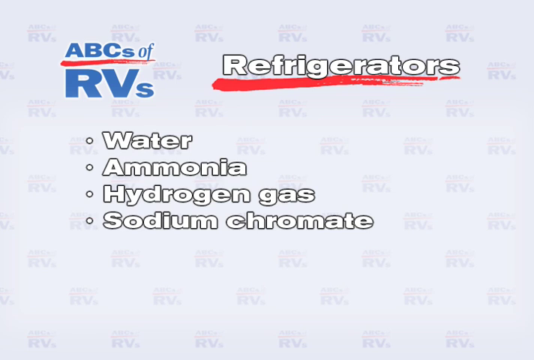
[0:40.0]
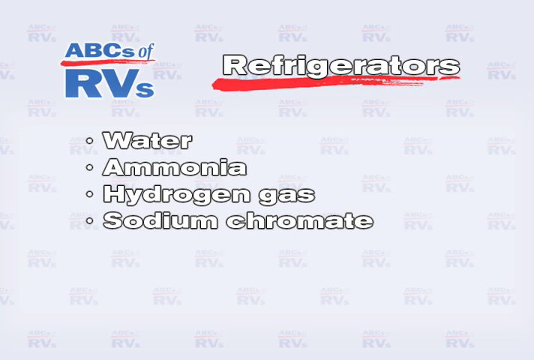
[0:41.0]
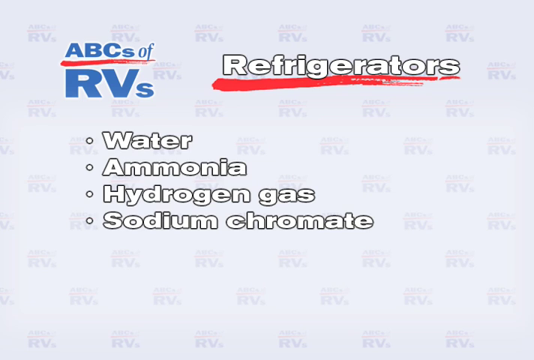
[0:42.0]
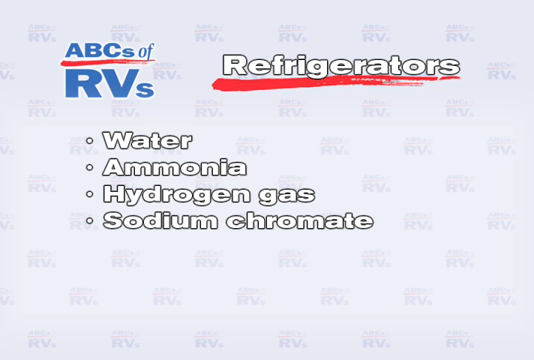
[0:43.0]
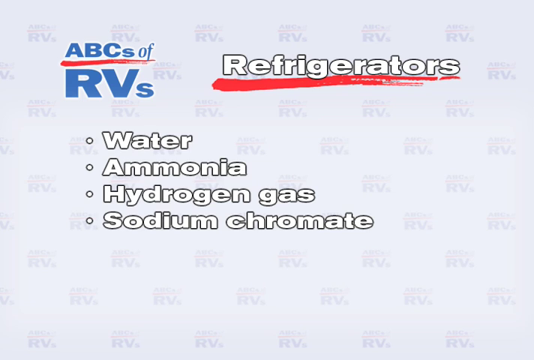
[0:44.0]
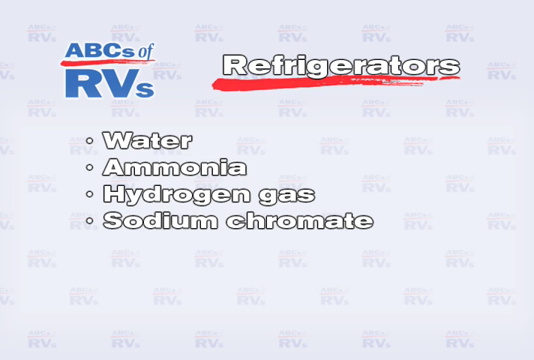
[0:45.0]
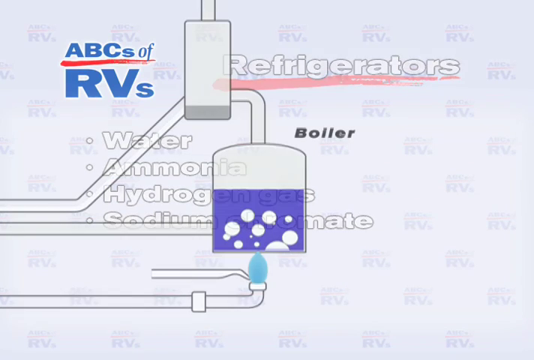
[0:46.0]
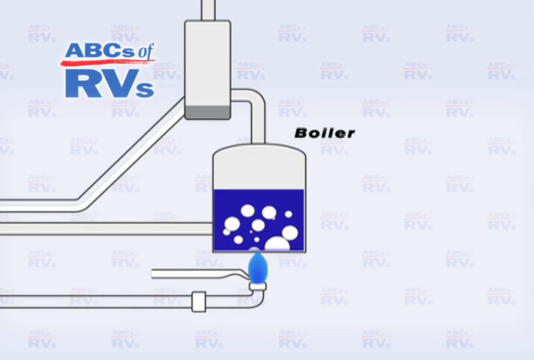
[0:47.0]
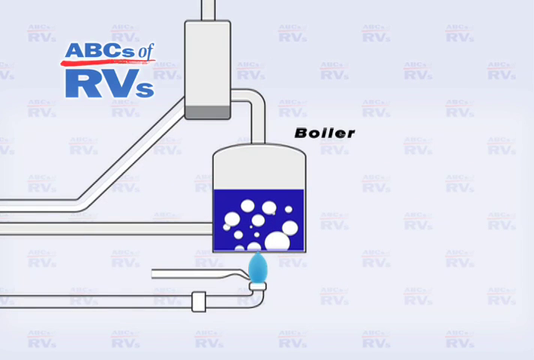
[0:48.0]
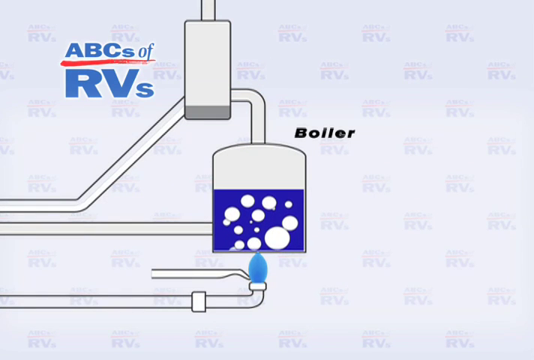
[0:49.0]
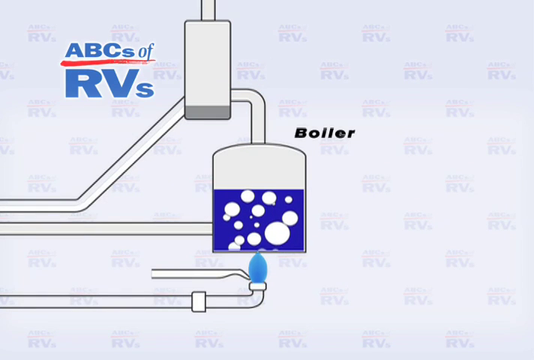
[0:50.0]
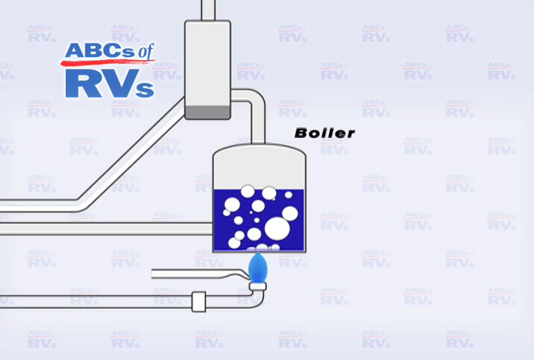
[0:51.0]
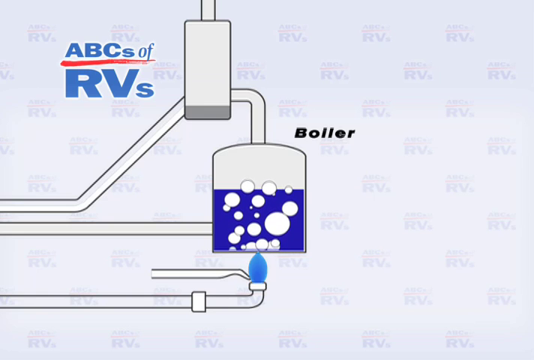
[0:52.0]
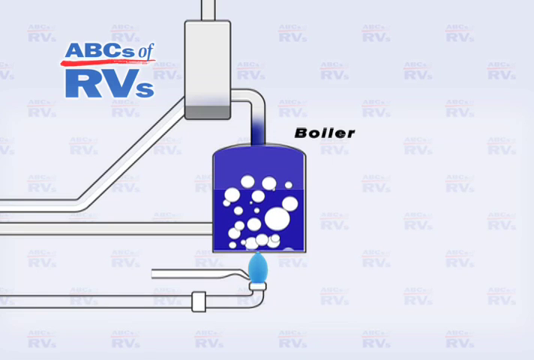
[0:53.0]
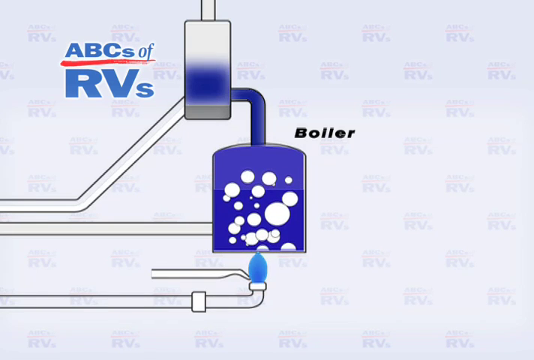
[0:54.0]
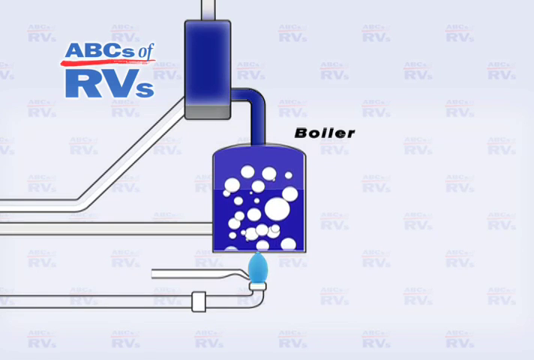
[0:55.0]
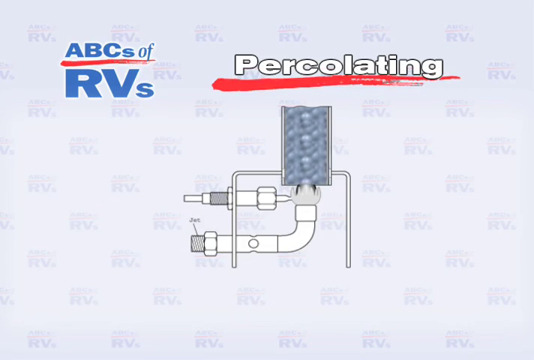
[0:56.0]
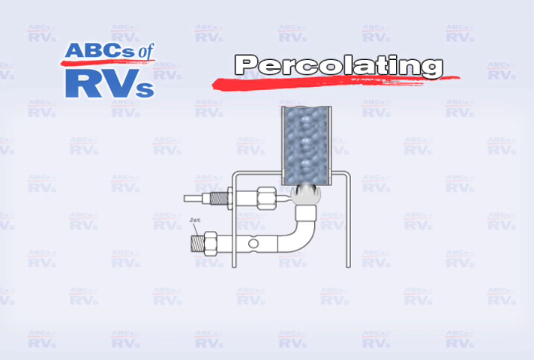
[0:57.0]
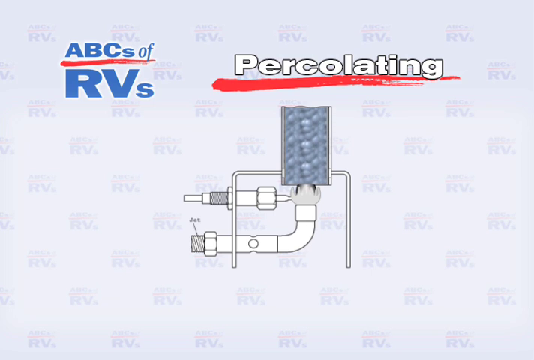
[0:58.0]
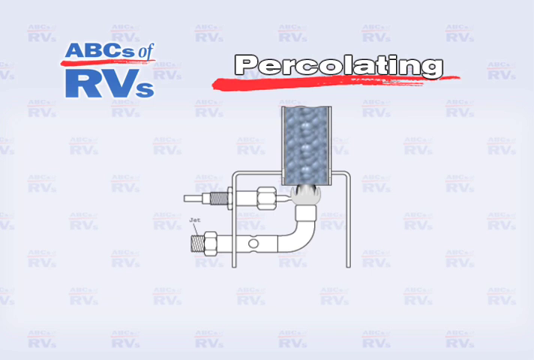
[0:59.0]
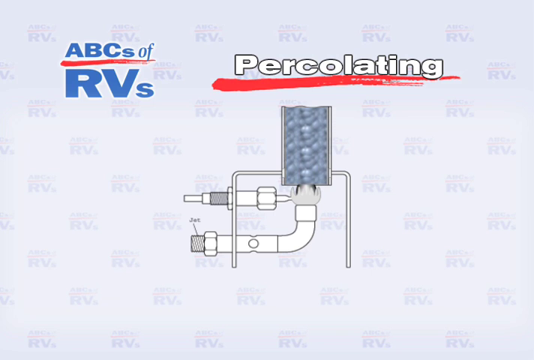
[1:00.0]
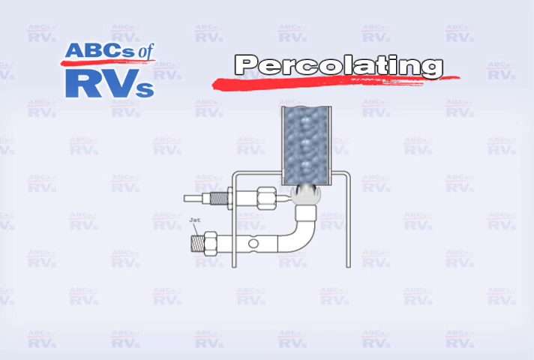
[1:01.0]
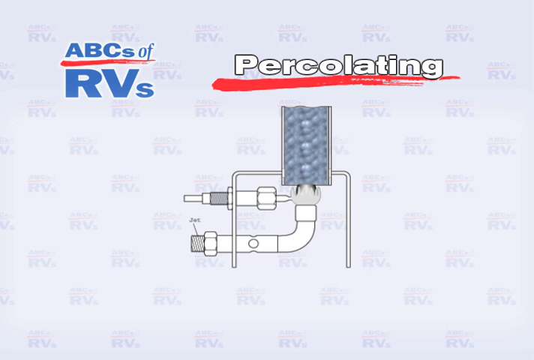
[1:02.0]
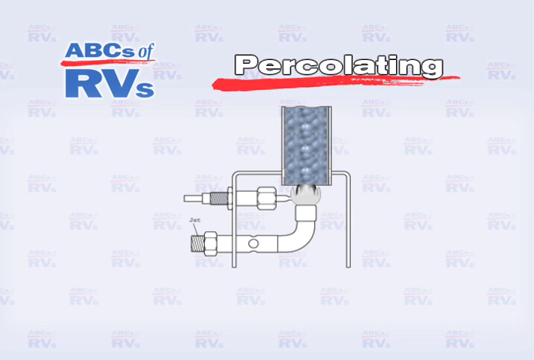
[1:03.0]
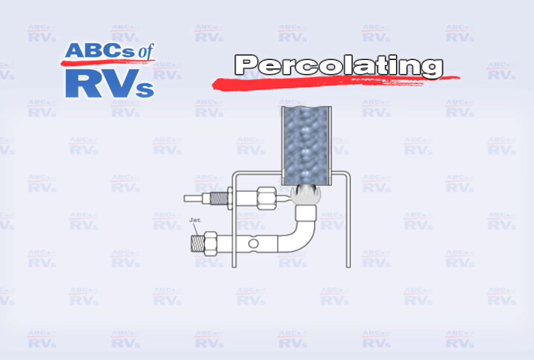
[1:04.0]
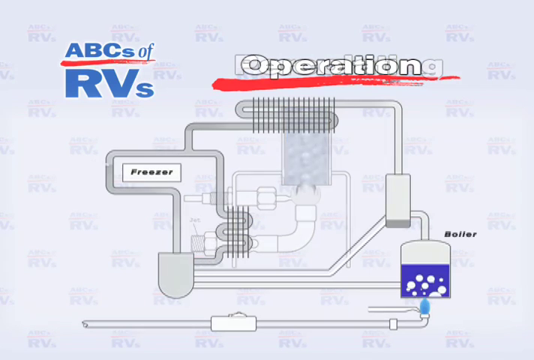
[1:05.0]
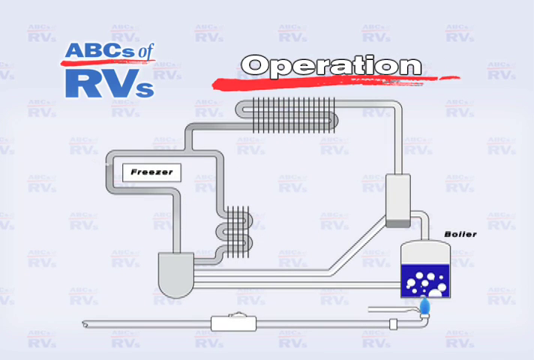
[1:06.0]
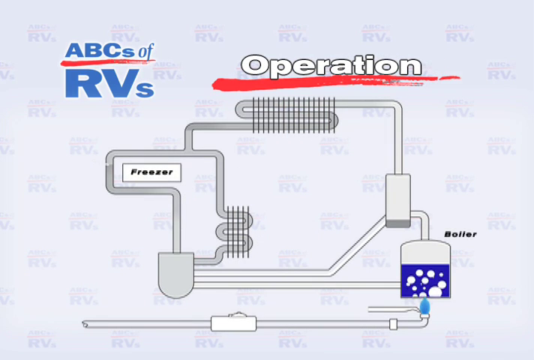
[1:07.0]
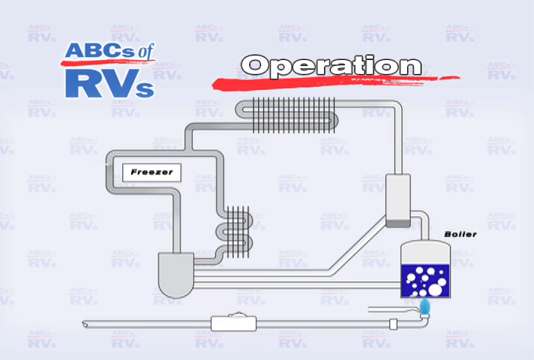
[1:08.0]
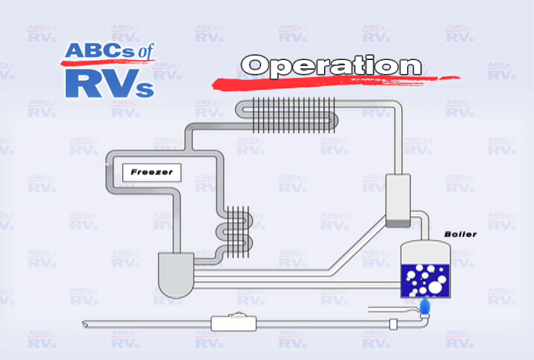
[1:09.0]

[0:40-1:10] The video shows where the RVs of the refrigerator are found and lists what the refrigerator has: point A, water; point B, ammonia; point C, hydrogen gas; point D, sodium chromate. It shows where the boiler is inside the refrigerator, and how the blue RVs are pumped into the boiler, pushed from the boiler through to another pipe, and from there go straight inside to make the refrigerator work.